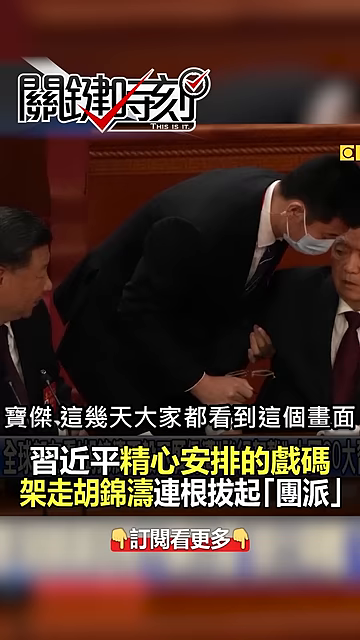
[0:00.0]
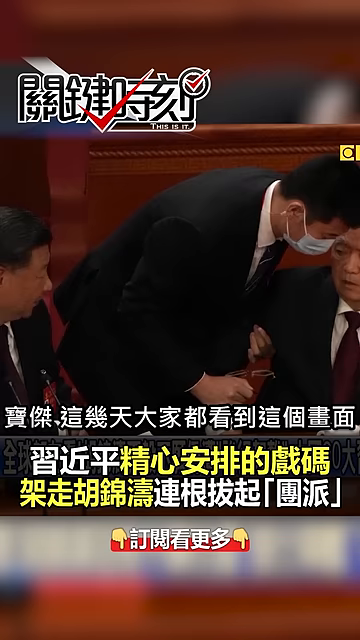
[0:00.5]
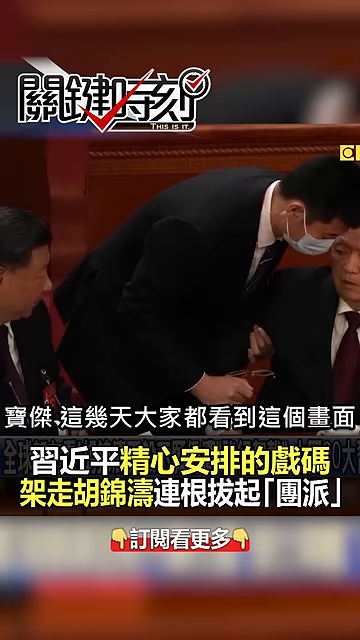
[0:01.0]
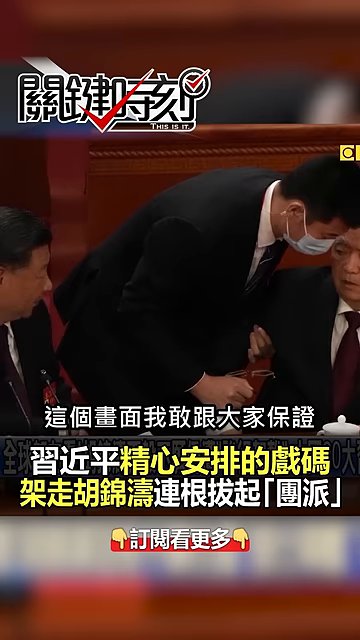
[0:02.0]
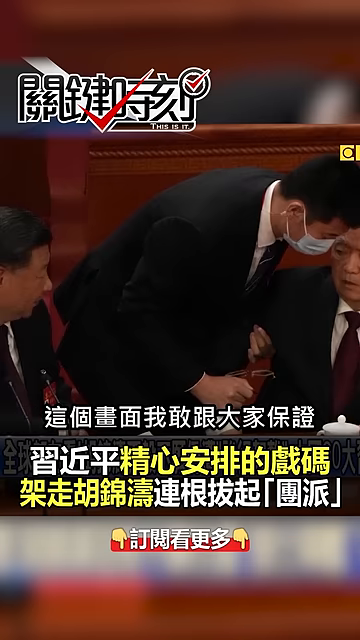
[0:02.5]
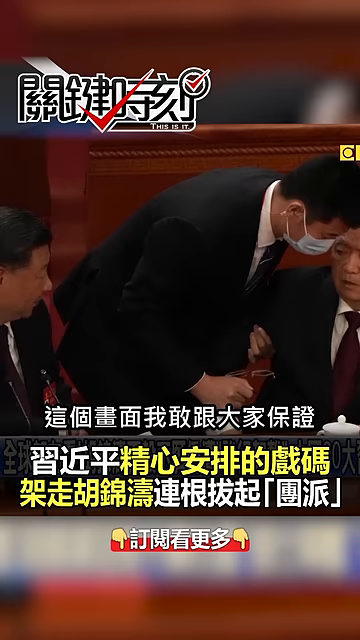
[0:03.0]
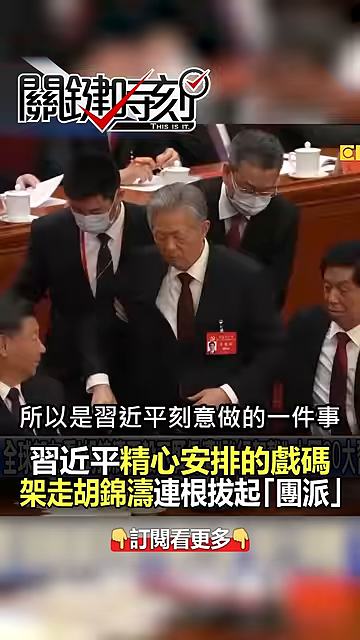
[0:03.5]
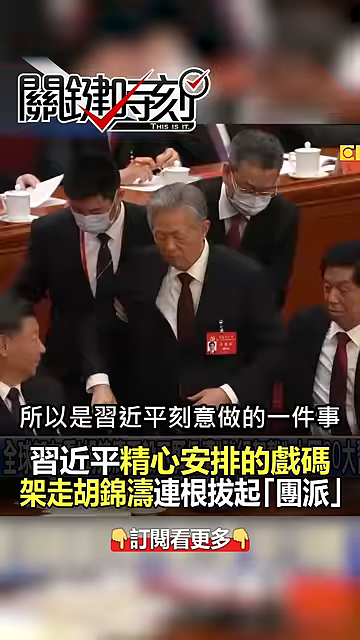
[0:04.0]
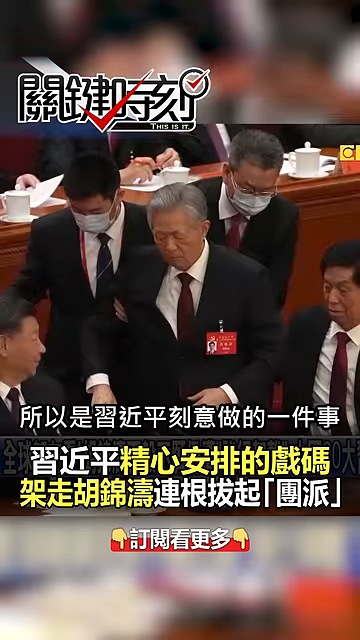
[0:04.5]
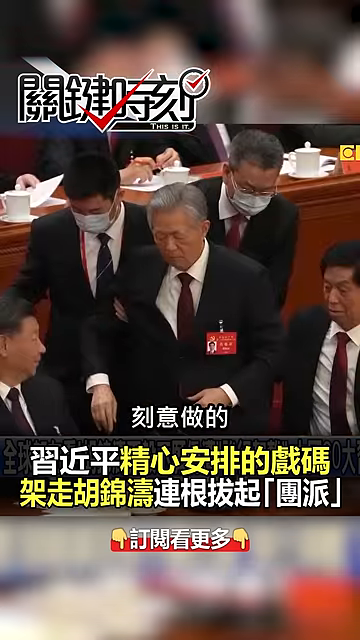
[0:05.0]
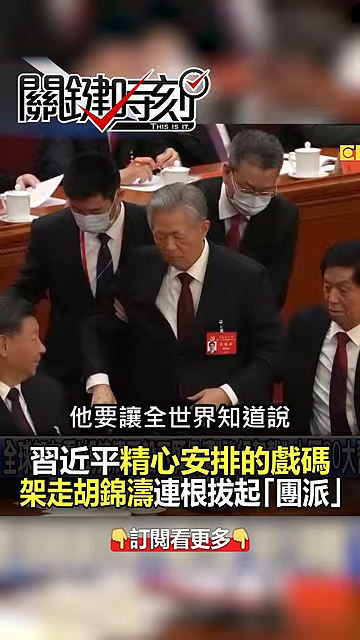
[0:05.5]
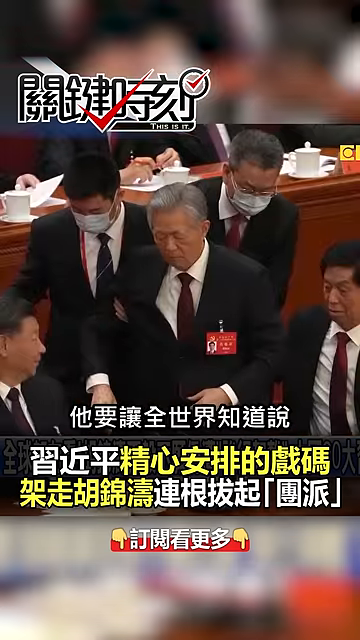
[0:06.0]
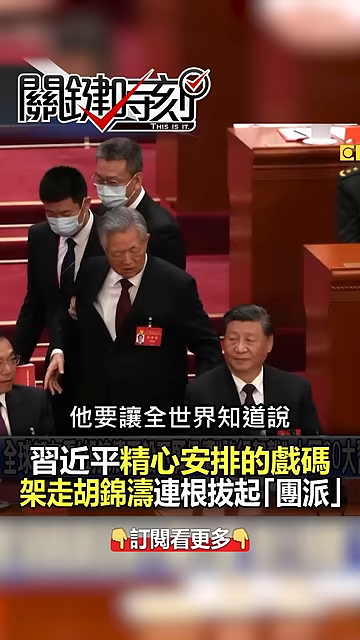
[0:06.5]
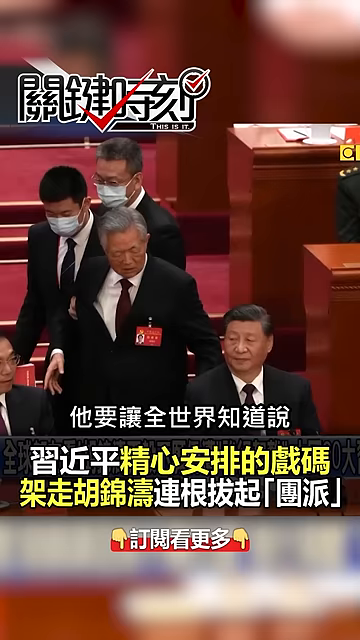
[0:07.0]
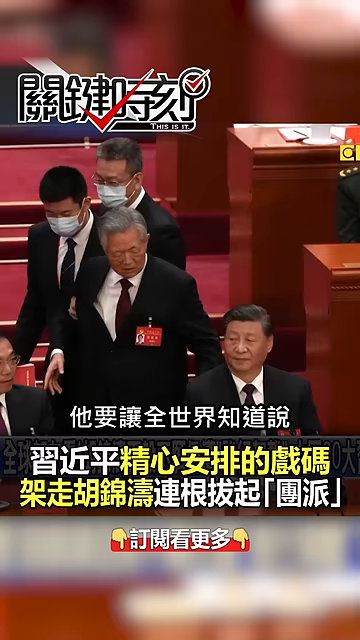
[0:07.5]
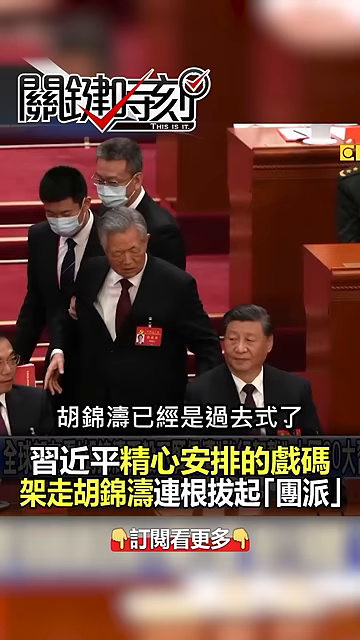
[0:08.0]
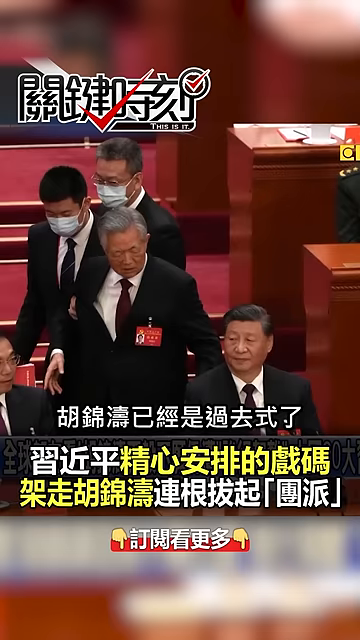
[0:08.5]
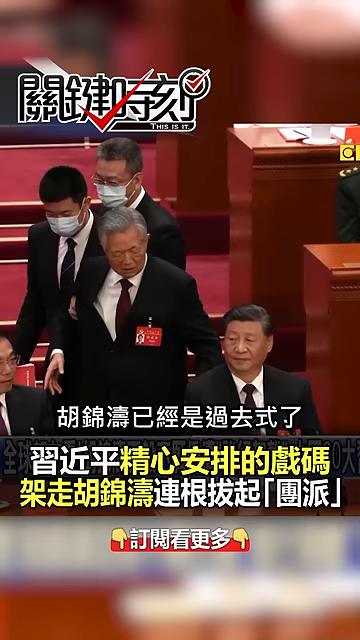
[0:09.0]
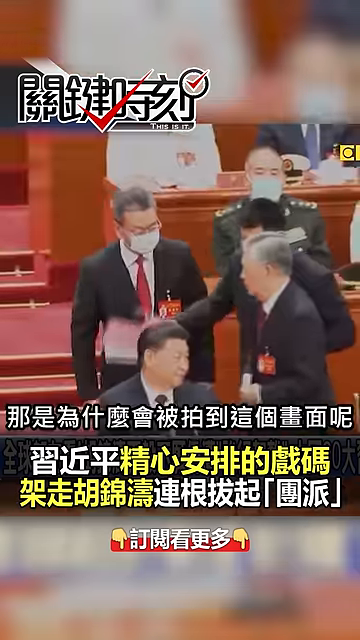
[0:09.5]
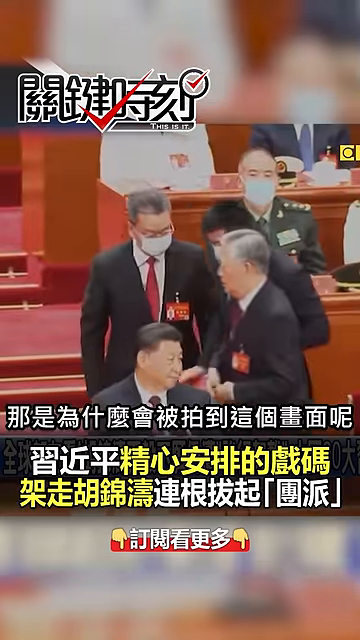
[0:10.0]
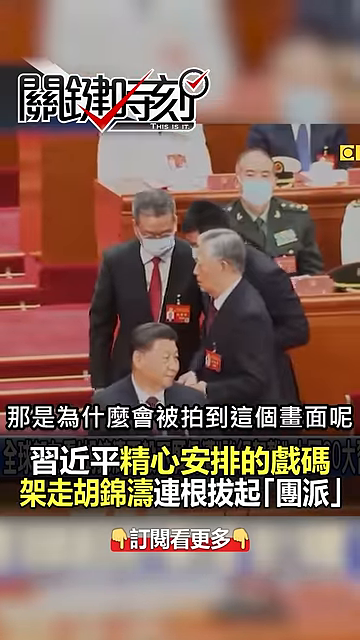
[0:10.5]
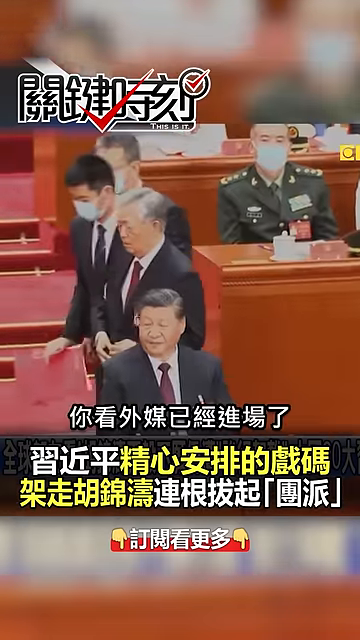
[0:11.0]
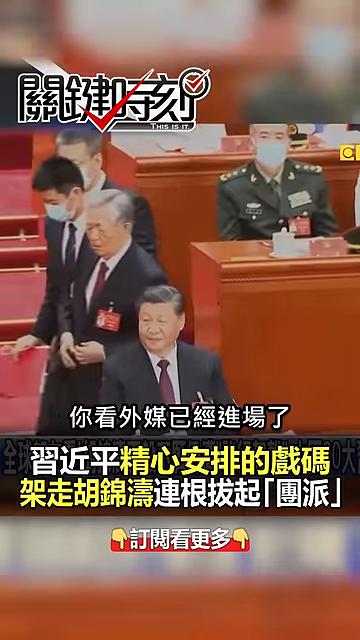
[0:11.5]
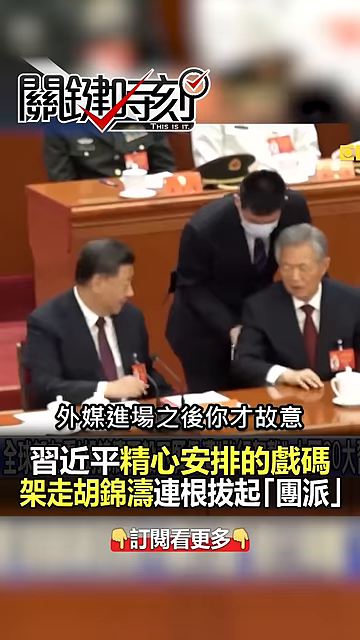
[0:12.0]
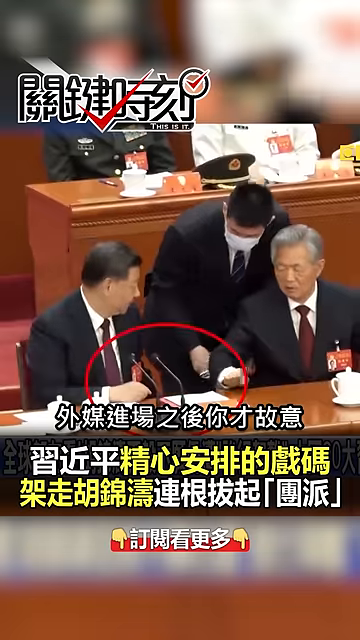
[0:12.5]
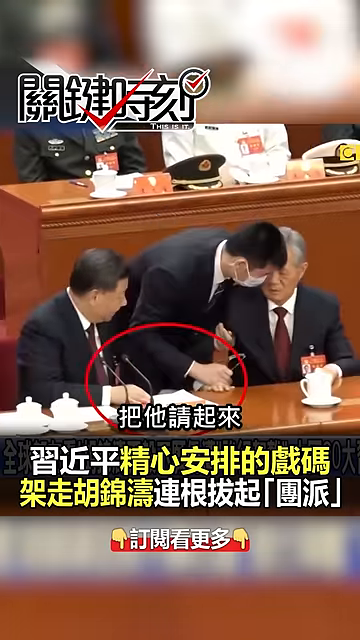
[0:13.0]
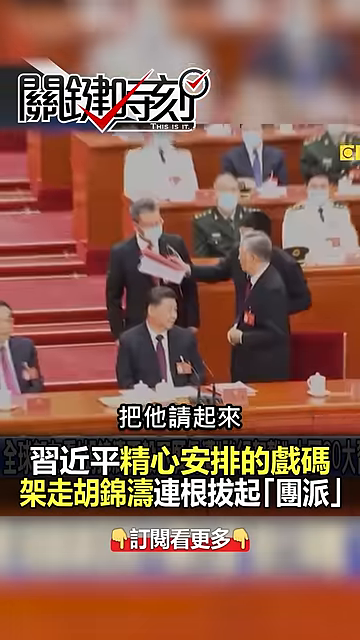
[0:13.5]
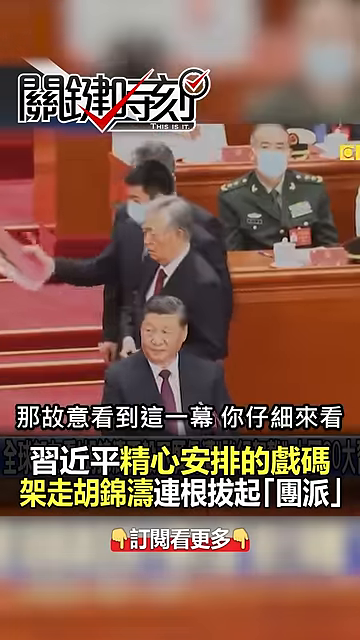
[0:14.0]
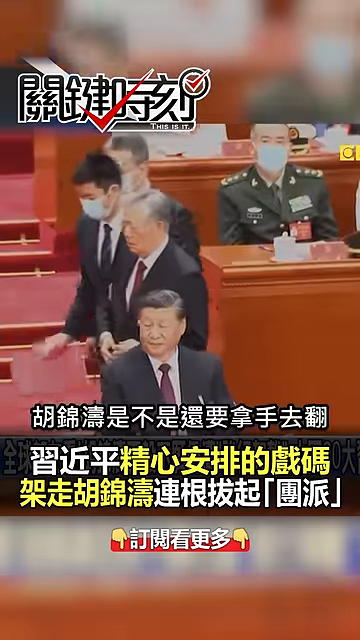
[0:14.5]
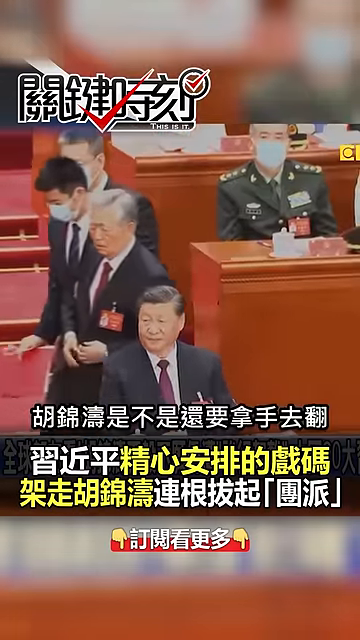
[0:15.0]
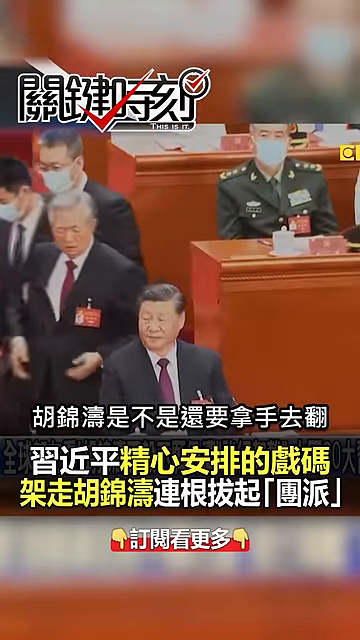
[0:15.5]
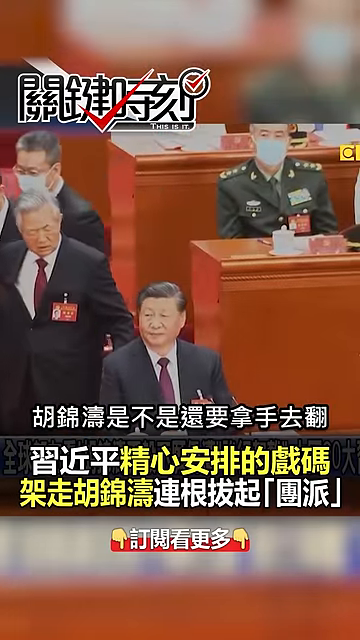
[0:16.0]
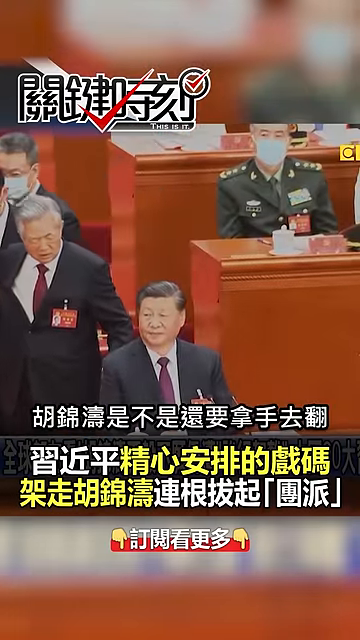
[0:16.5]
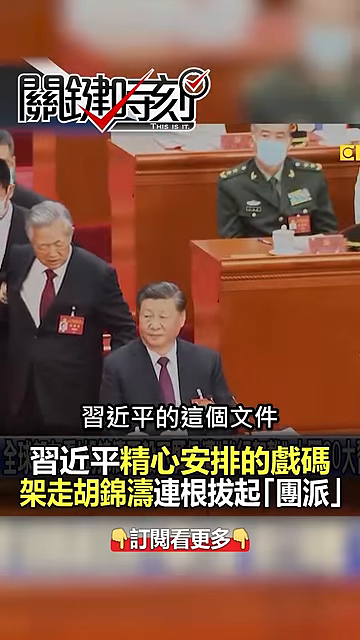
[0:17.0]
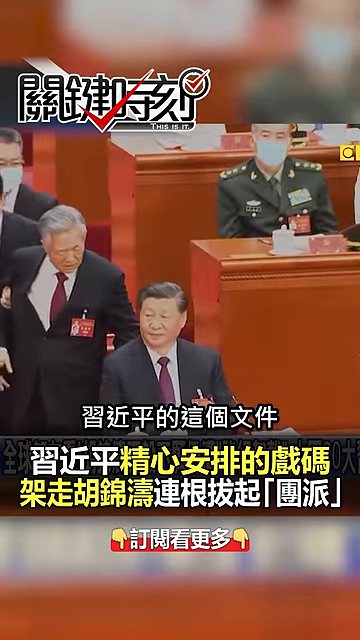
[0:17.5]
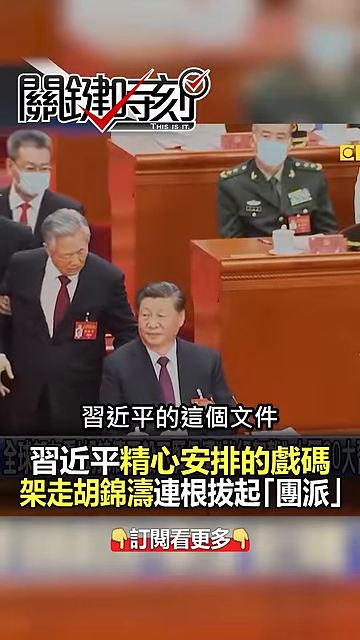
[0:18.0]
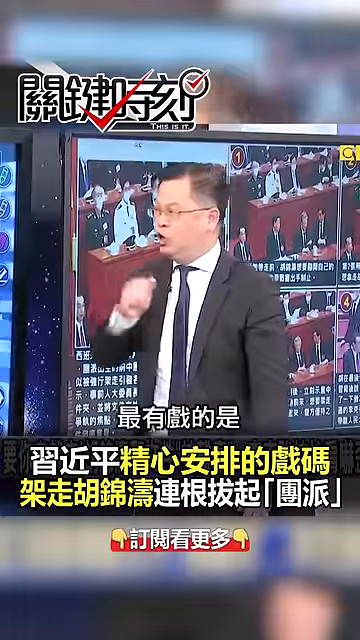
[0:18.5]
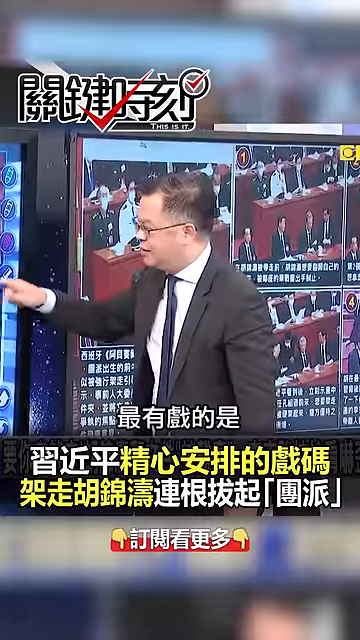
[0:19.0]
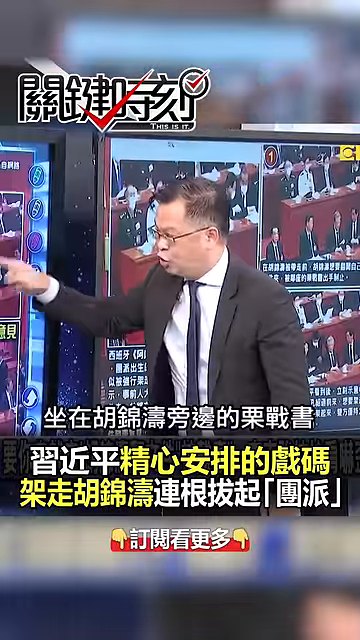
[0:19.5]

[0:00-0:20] Asian leaders gather for a meeting, all wearing black suits and white shirts, most of them with red ties, in what looks like a meeting room with many wooden desks. Some of them wear masks. A piece of paper lies on one of the desks with a circle drawn around it, possibly marking where something is being signed. A gray-haired, older-looking man signs something, and then some men take away a red folder. The men are dressed very formally. The writing in the video appears to be Chinese, and Chinese subtitles run throughout the video. The view then pans to a man pointing at a screen who looks angry and is talking.